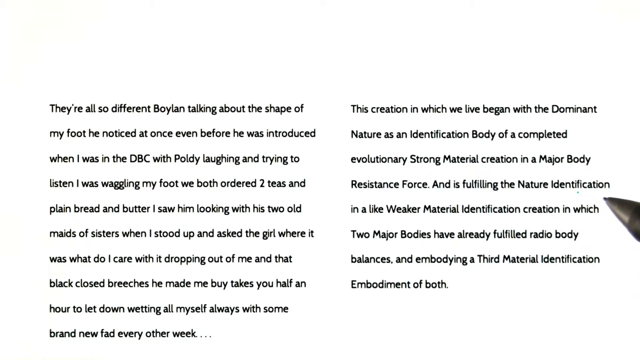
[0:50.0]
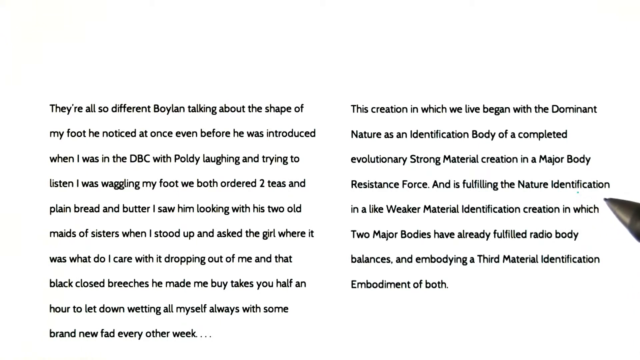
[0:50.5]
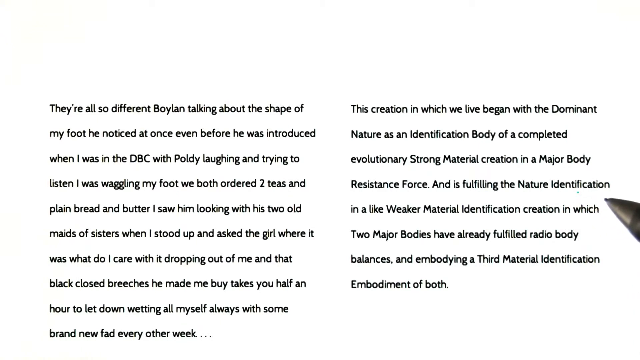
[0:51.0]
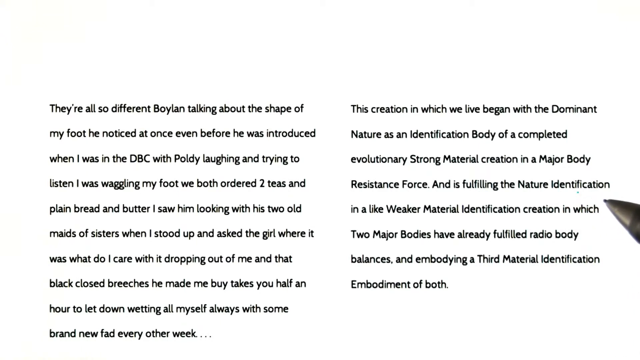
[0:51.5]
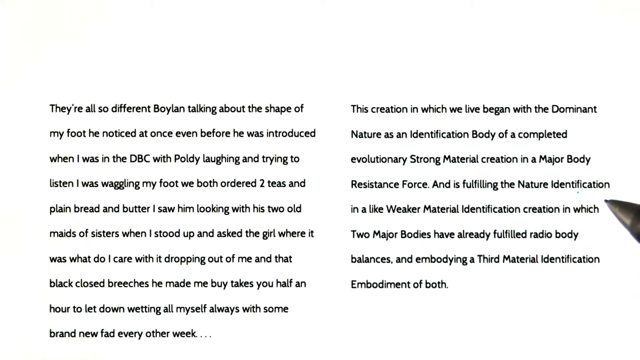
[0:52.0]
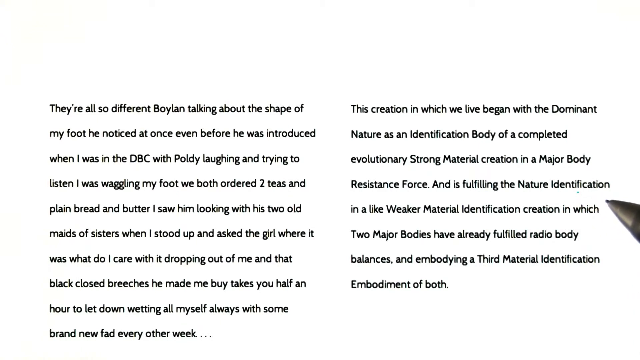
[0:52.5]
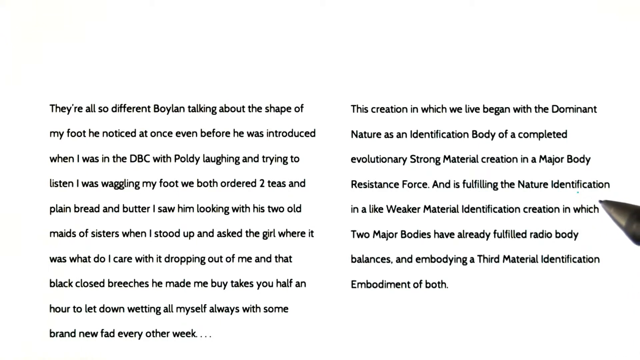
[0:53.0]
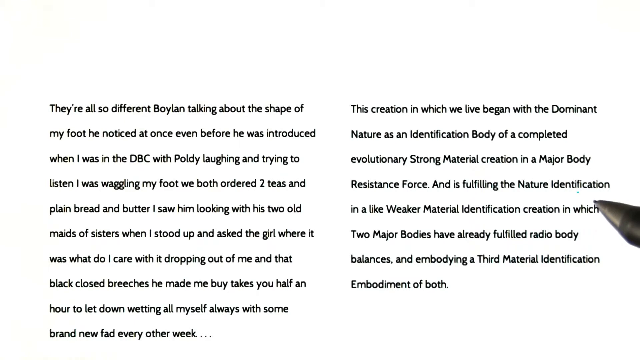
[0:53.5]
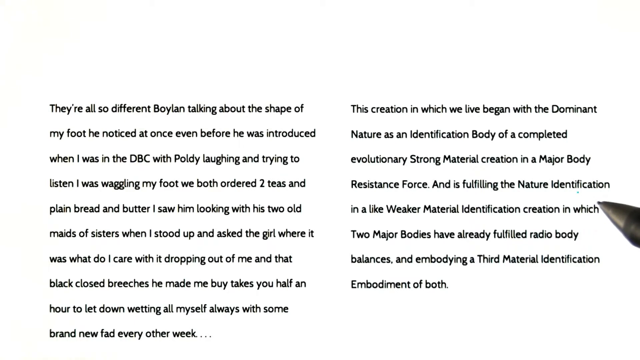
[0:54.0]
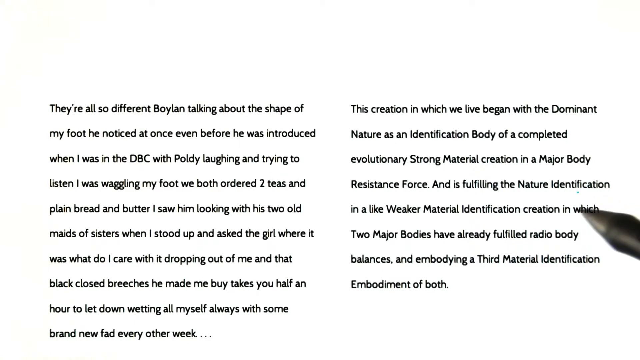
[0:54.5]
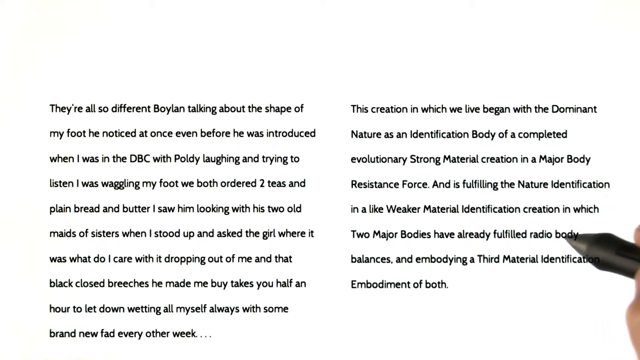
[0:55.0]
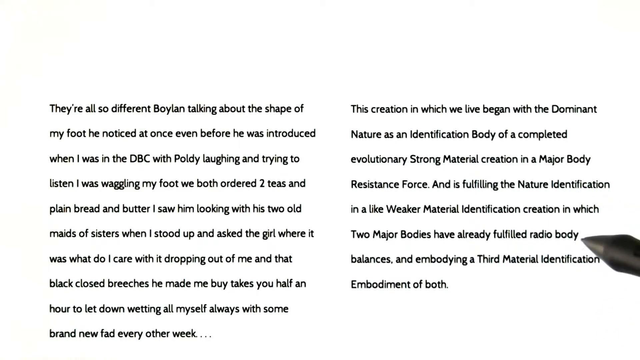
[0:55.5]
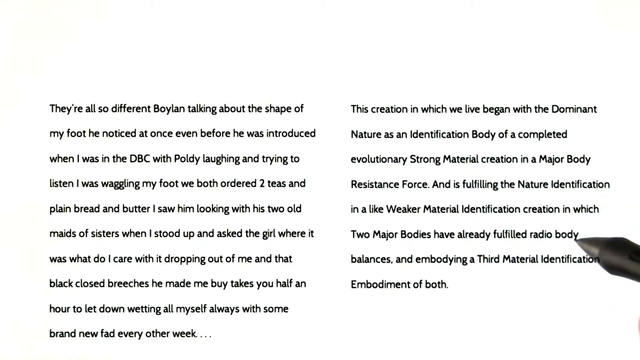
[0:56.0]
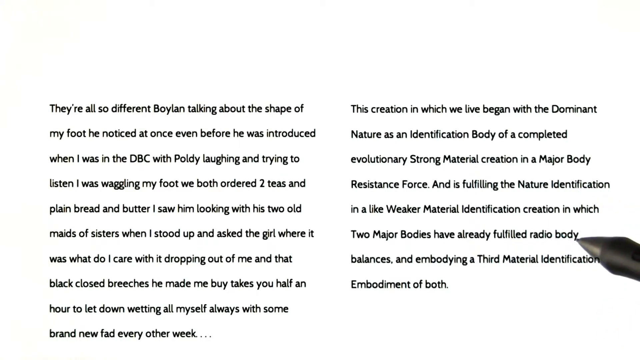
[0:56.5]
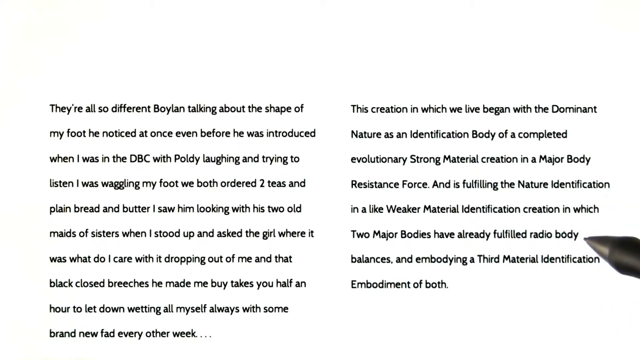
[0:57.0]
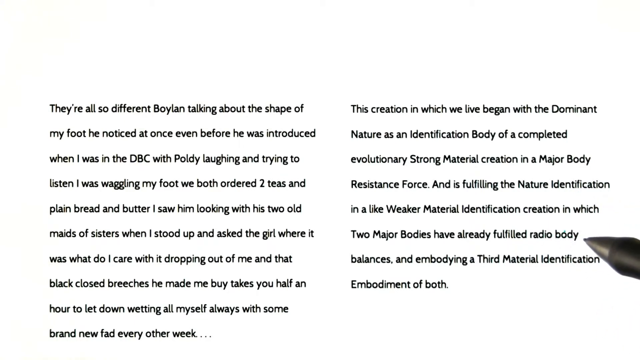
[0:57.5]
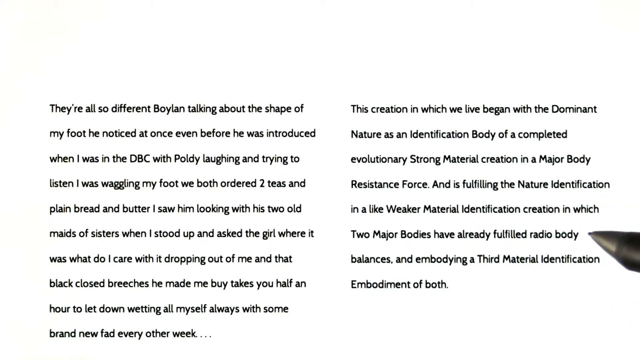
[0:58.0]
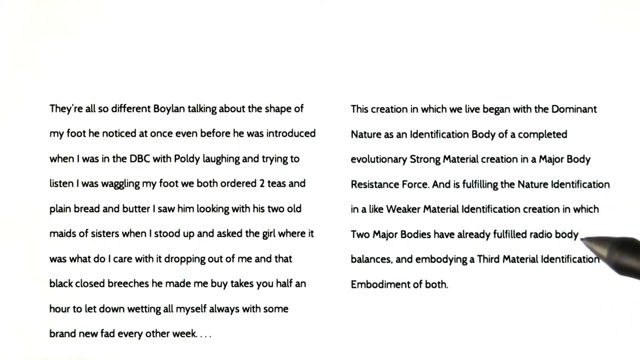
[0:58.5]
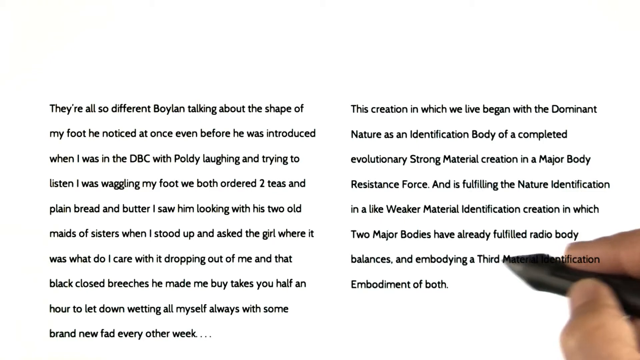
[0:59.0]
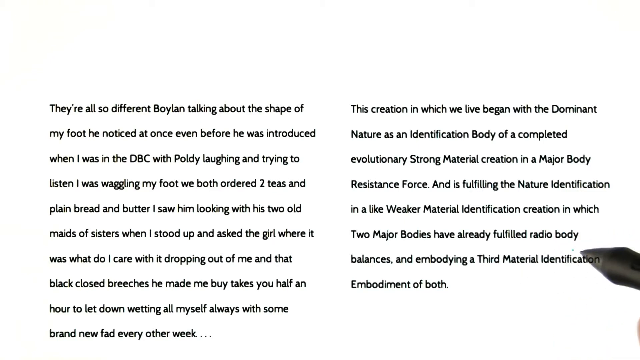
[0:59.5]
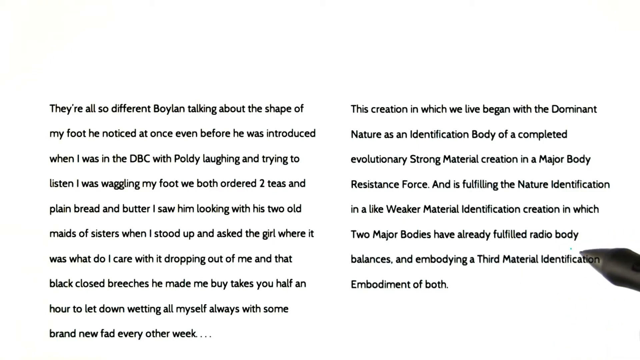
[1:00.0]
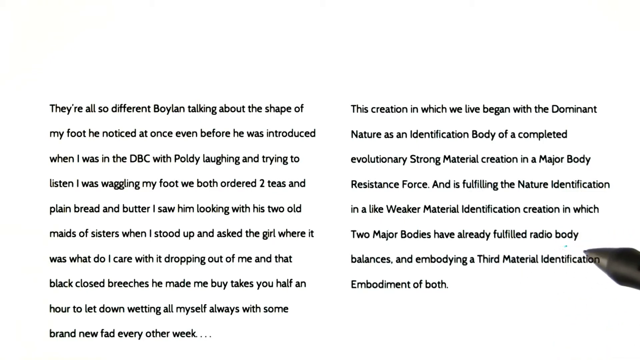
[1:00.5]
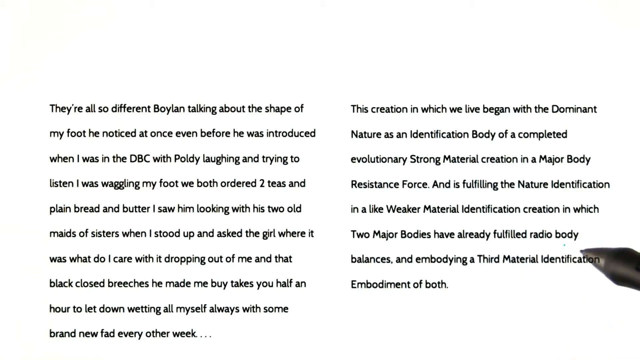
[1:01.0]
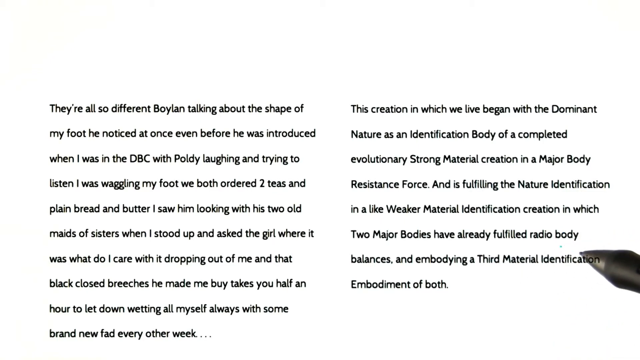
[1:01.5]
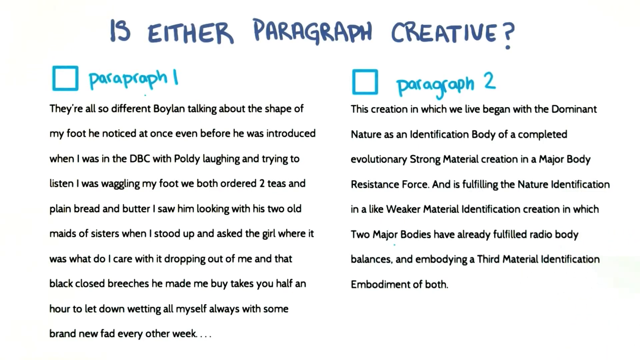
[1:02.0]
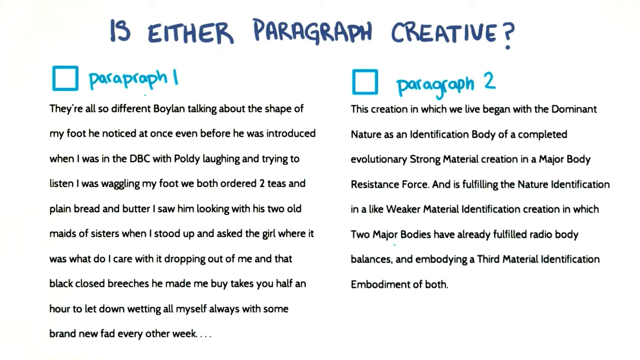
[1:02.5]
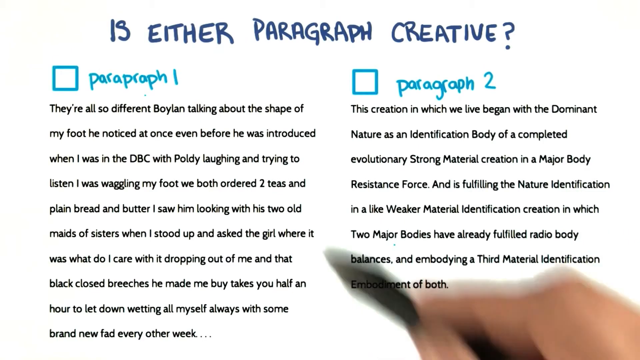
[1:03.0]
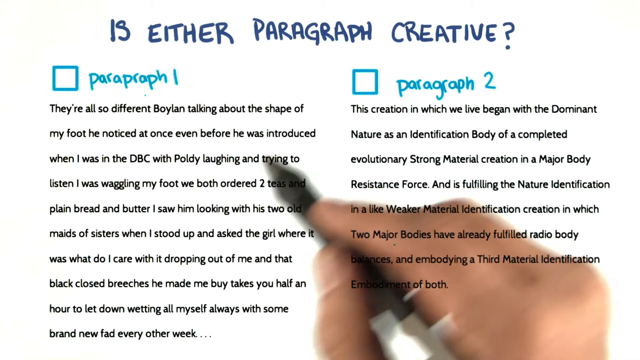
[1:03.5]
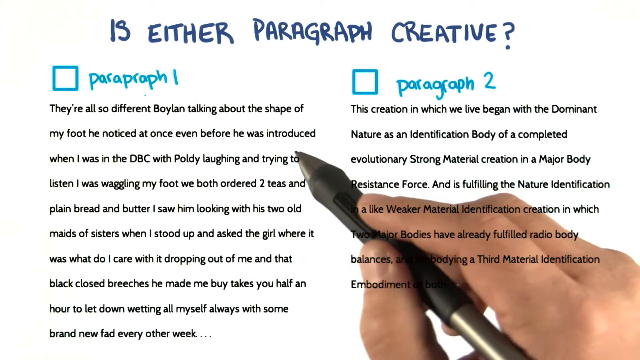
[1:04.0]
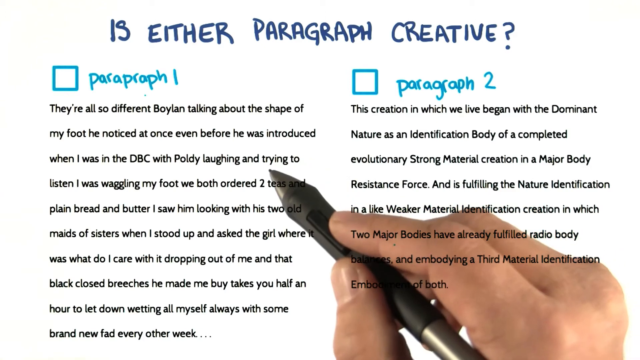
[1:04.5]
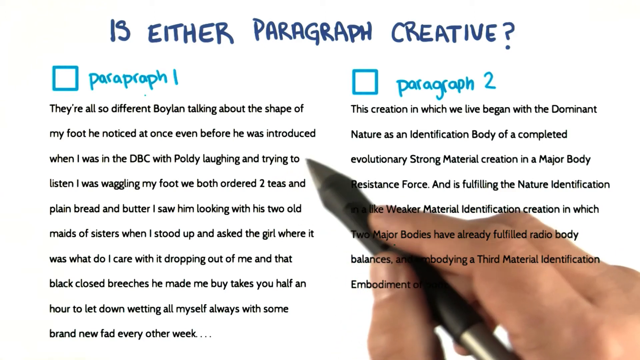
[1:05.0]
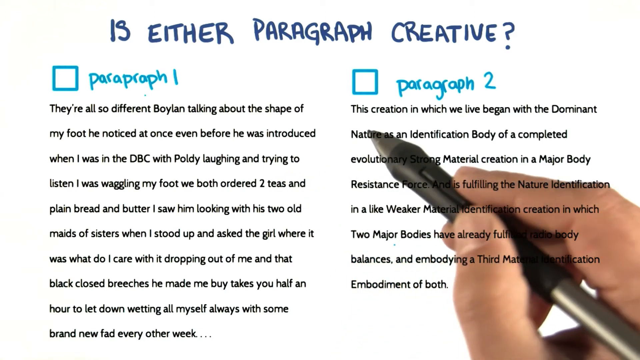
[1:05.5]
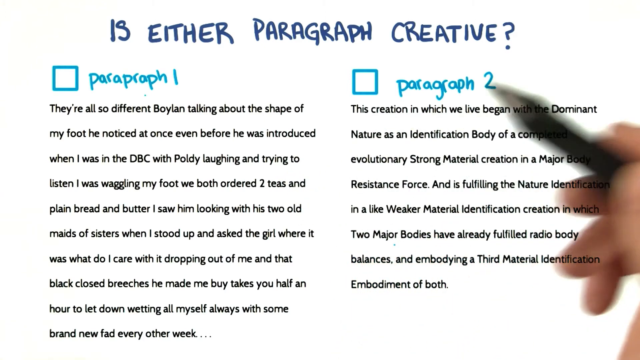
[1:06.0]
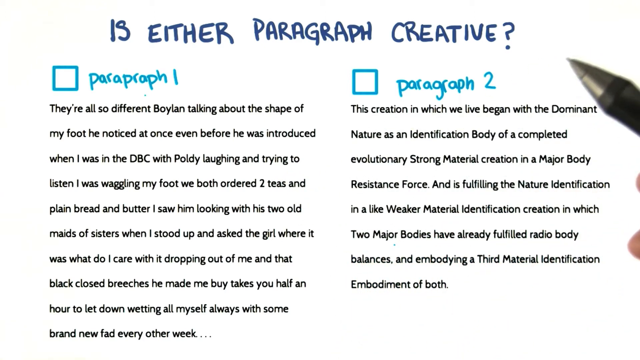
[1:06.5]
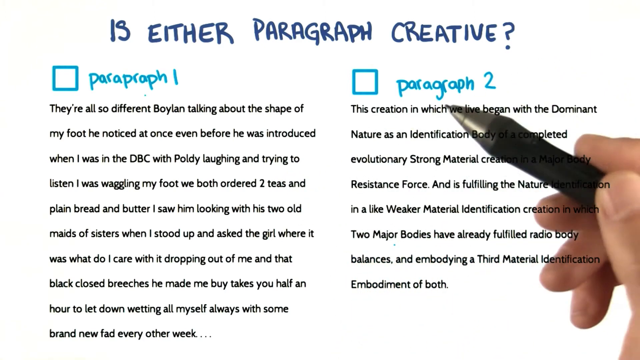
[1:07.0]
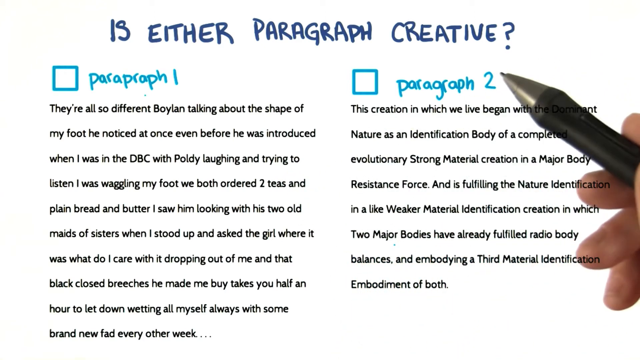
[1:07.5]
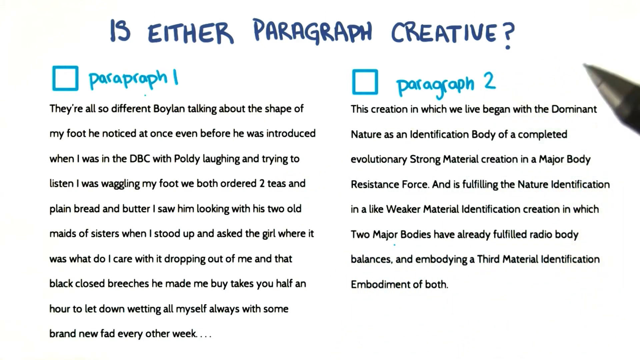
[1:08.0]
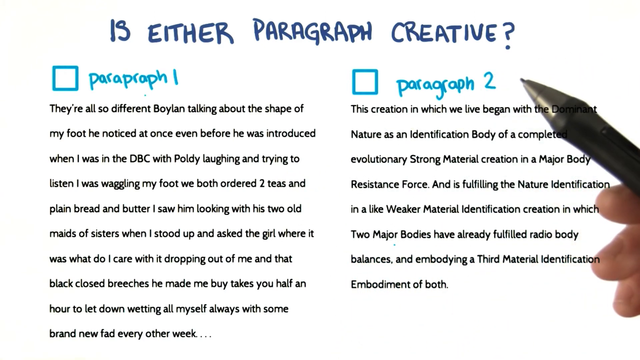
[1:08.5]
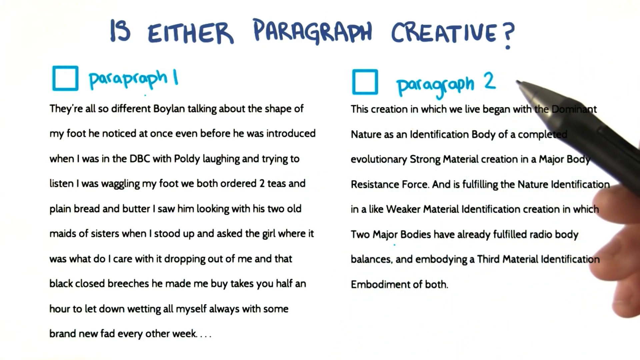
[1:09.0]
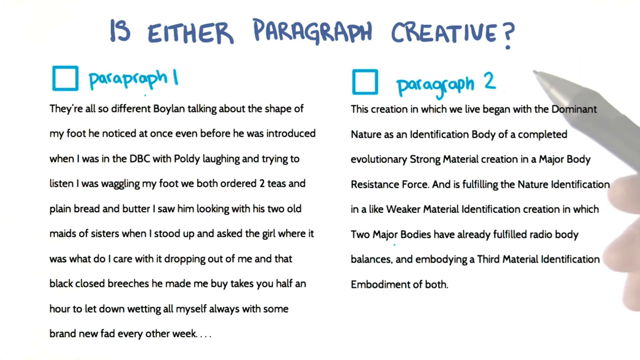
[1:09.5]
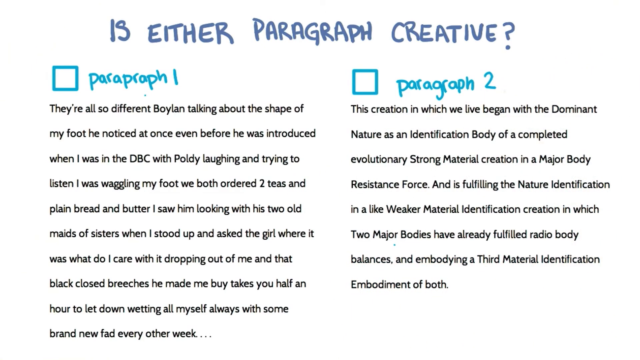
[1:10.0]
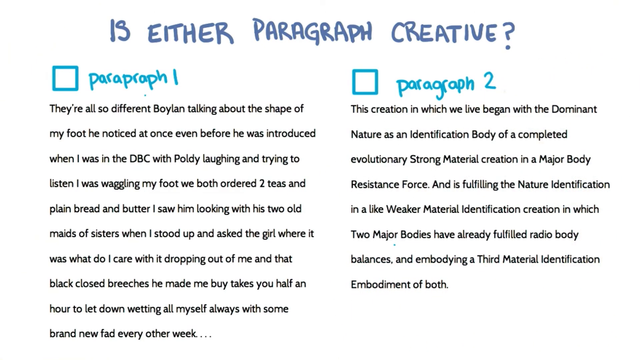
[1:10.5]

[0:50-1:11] The pencil is hanging off toward the far right side. For a moment the hand is barely visible and only the tip of the pencil shows, but then the hand comes back and continues down the sentences of the right paragraph, highlighting the last couple of words of each one. Text then appears at the very top, looking almost handwritten, with darker blue text above and light blue text below. The darker text says "is either paragraph creative." Below it is a light blue box with light text that appears to read "para-fraf one" rather than "paragraph one." Over the right paragraph there is another light blue box that says "paragraph two." The hand with the pen or pencil pops out again and moves diagonally from the left side up to the right.